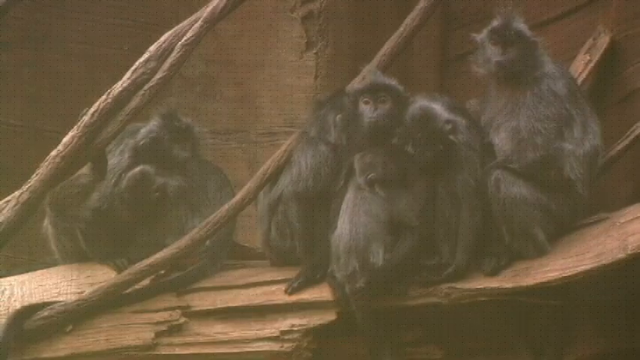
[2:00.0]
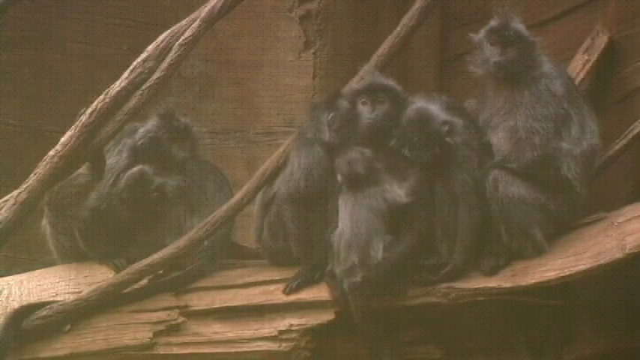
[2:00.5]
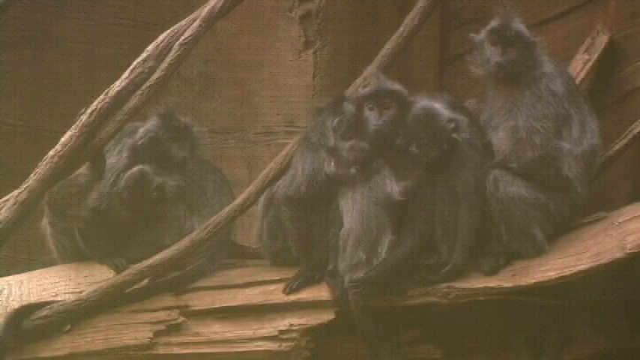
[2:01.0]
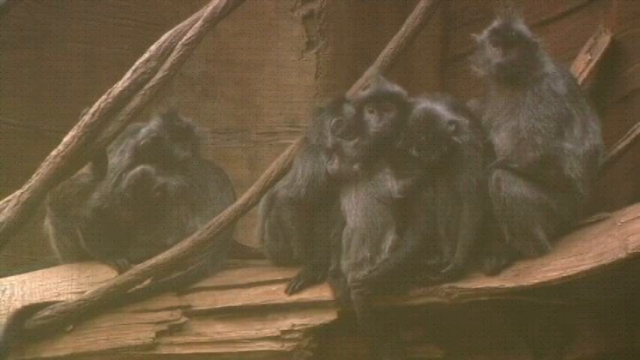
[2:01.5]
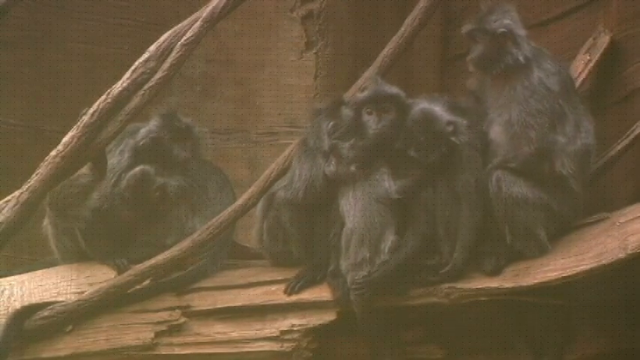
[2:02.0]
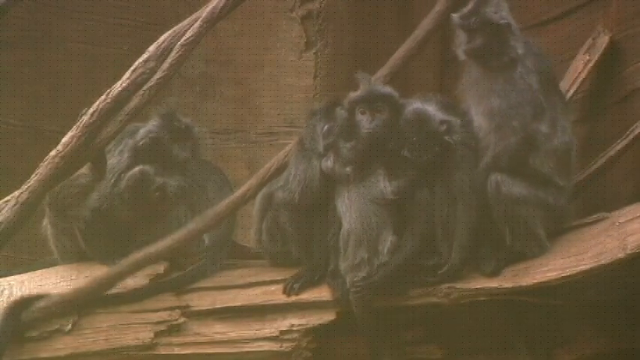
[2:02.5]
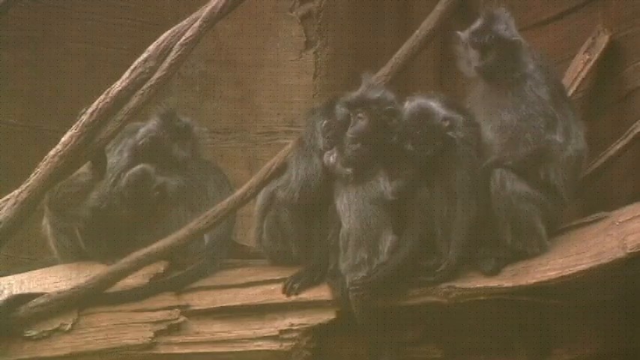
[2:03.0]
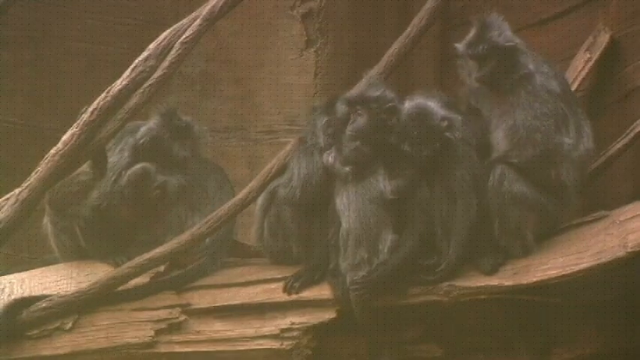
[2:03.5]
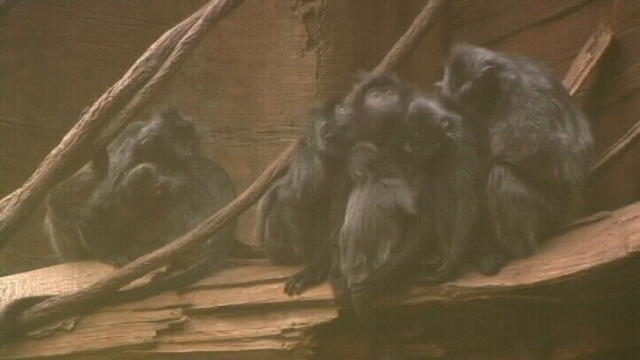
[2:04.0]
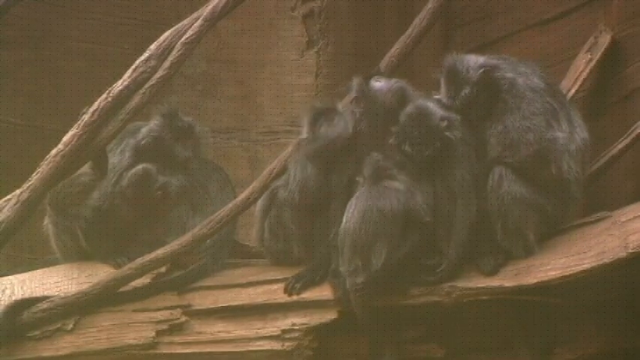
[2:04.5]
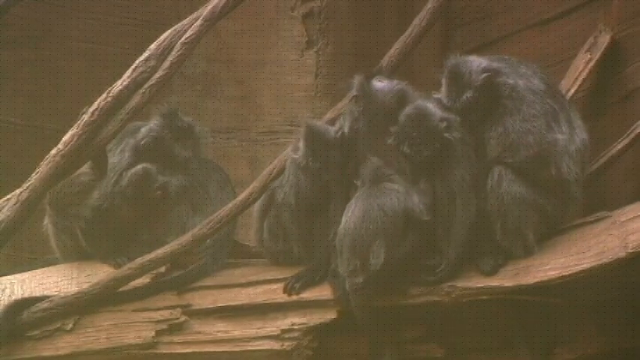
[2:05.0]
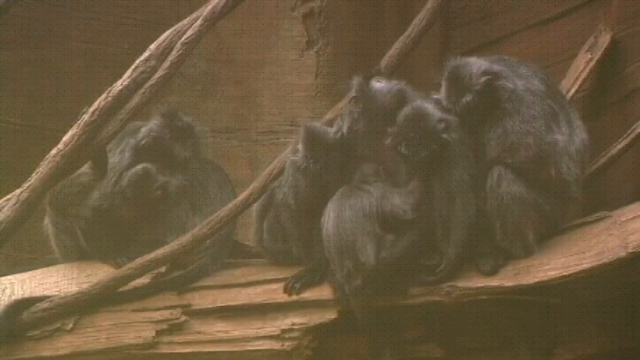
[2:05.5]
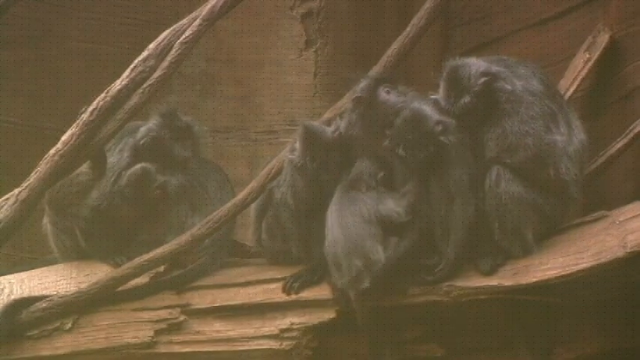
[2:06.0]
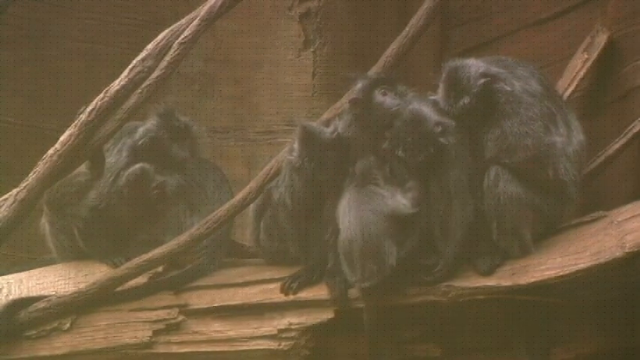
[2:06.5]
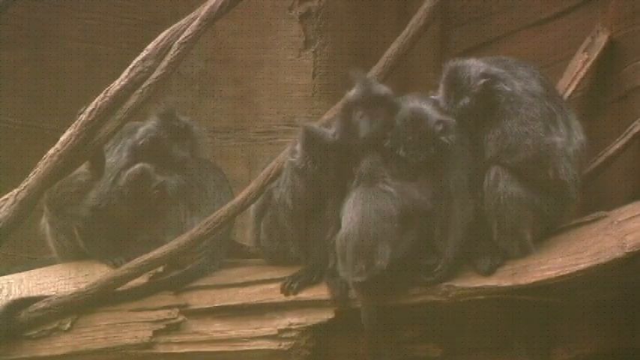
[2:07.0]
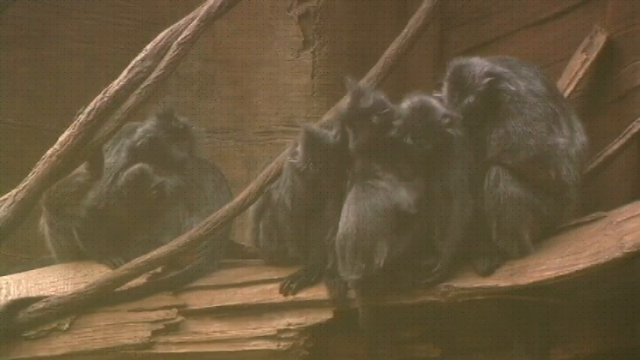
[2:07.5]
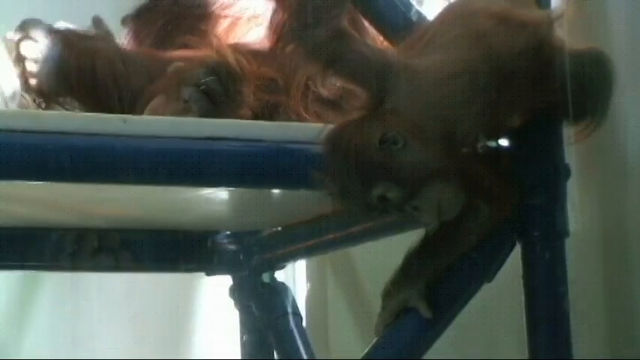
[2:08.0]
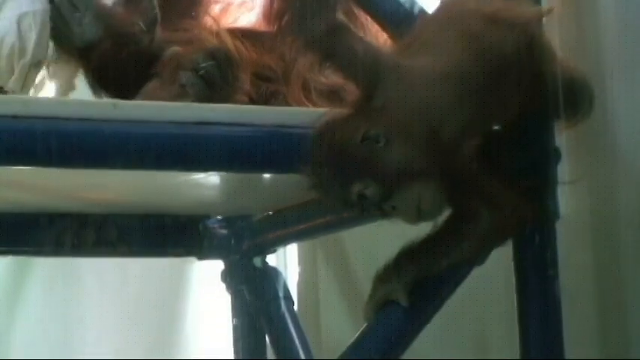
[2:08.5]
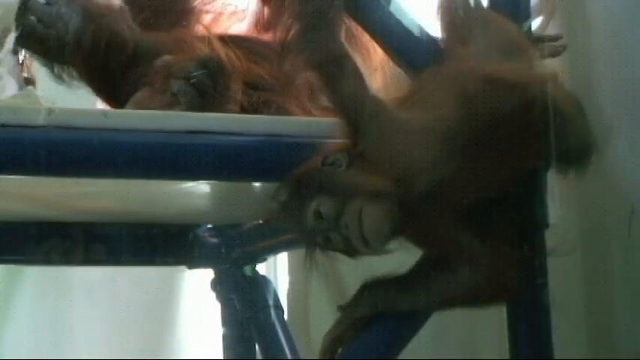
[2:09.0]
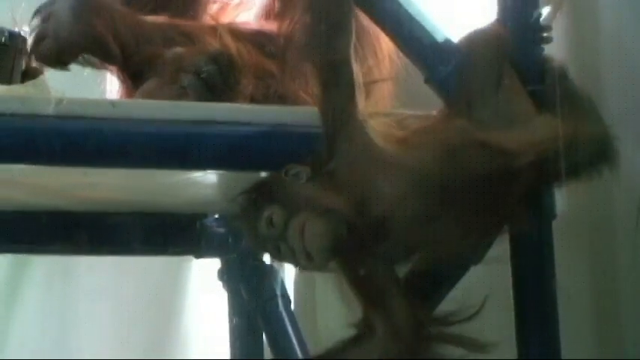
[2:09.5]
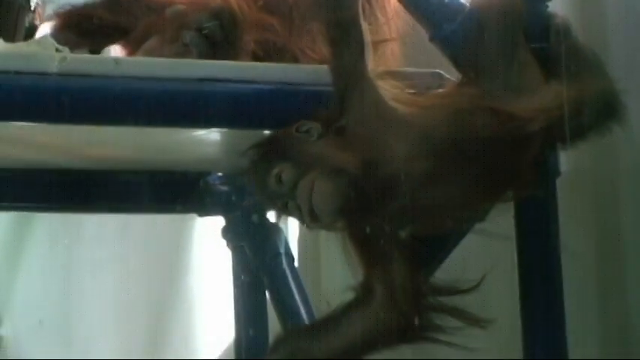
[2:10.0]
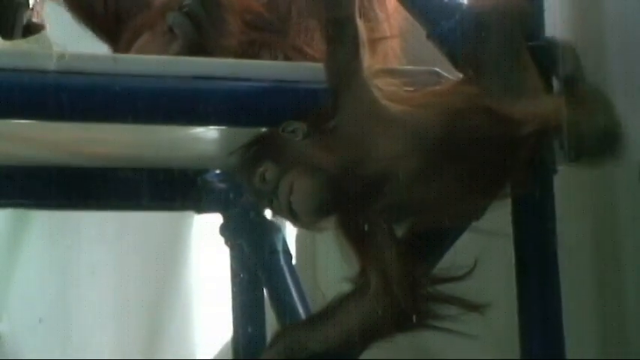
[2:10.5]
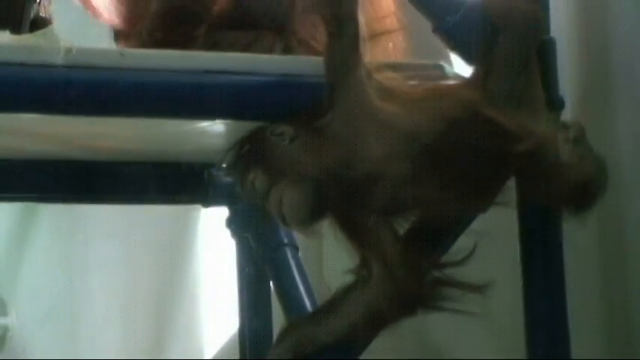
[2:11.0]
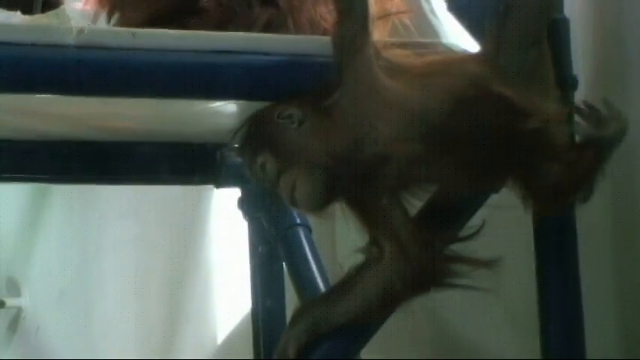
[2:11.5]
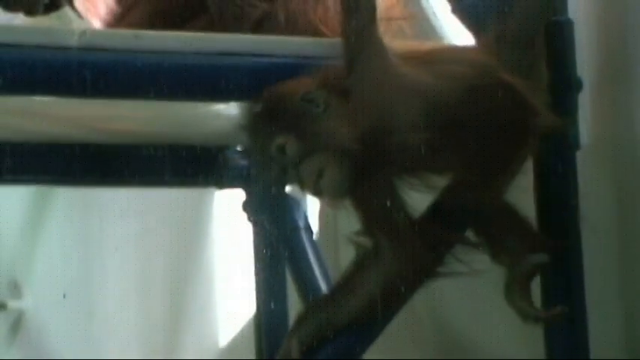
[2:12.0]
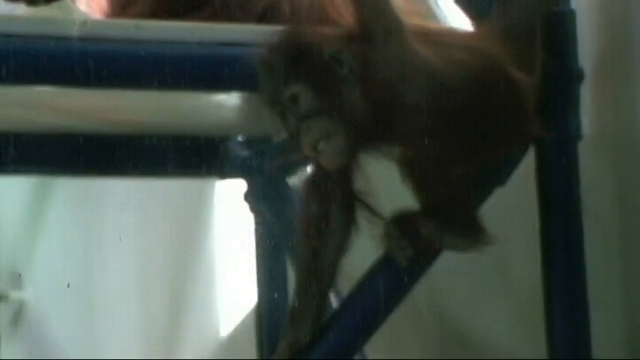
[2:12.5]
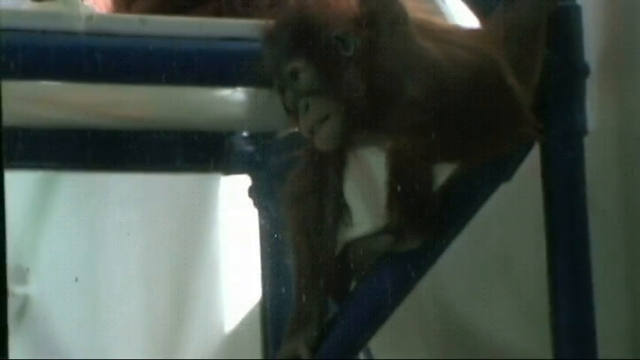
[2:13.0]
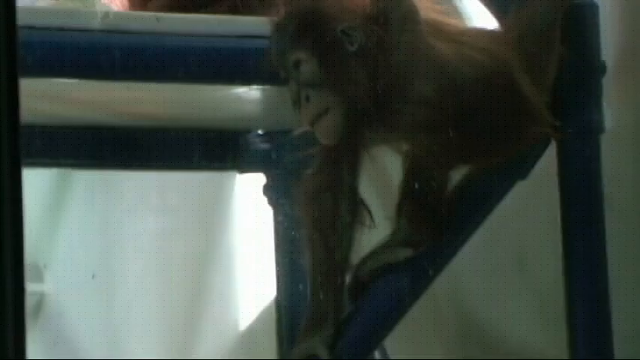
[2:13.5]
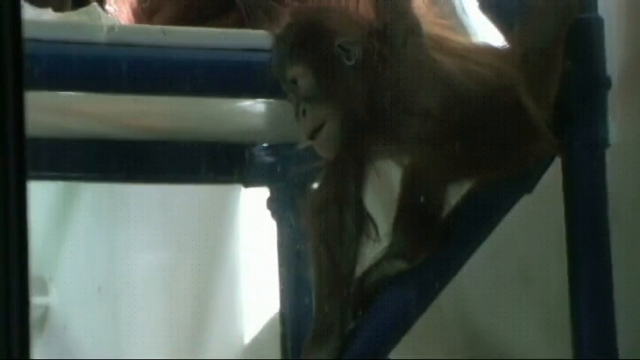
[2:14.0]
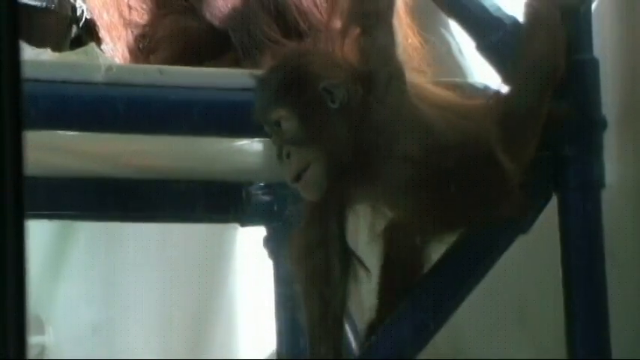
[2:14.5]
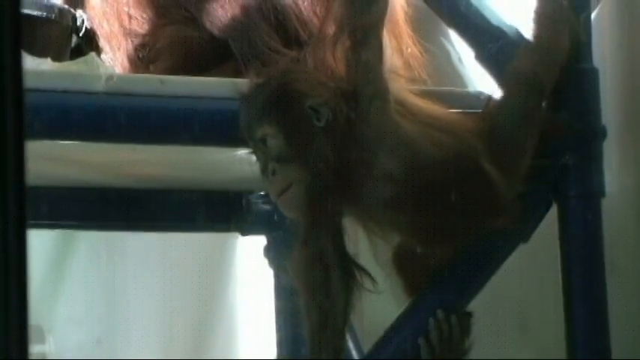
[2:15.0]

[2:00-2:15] The video transitions one last time to a different kind of animal: a group of chimpanzees, at least 5 or 6 of them. One of them is a female, with her young feeding from her breast. They are all sitting on what seems to be a dried, horizontal log, maybe in a zoo setting, and they seem relaxed. Finally, the video shows two chimps: a young chimp hanging from what seems to be a metallic blue structure, and another chimp sitting behind it on top of the structure. The young chimp seems relaxed and is looking around.